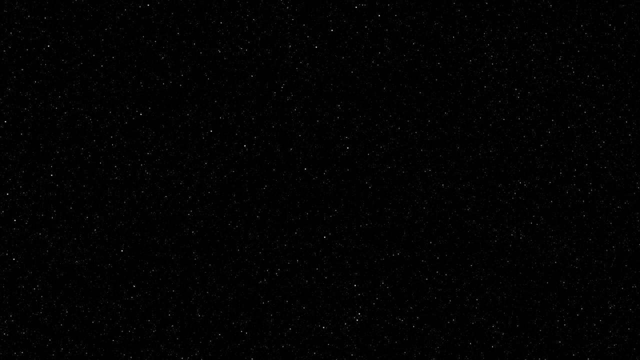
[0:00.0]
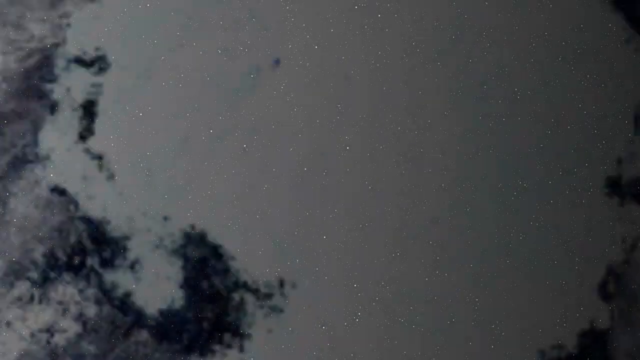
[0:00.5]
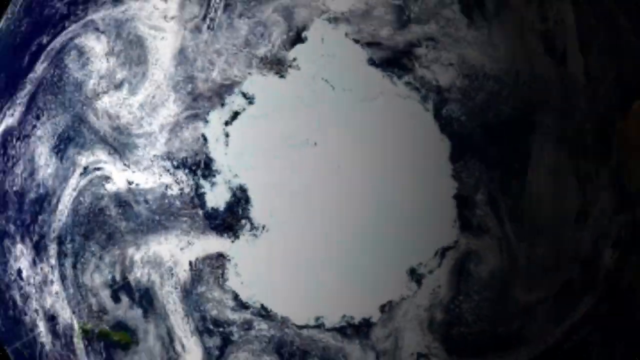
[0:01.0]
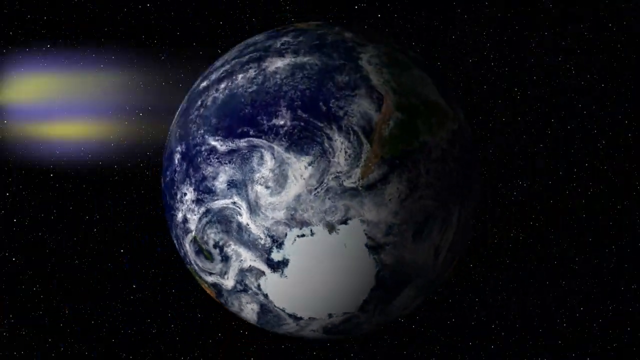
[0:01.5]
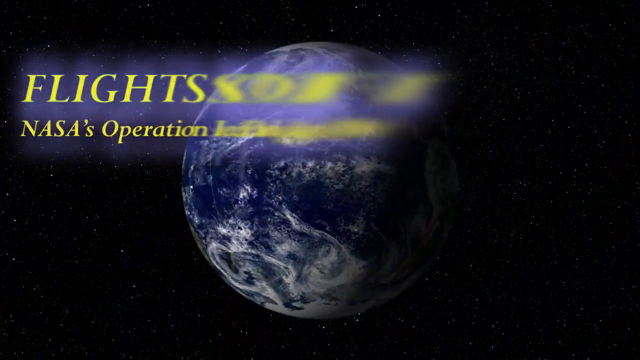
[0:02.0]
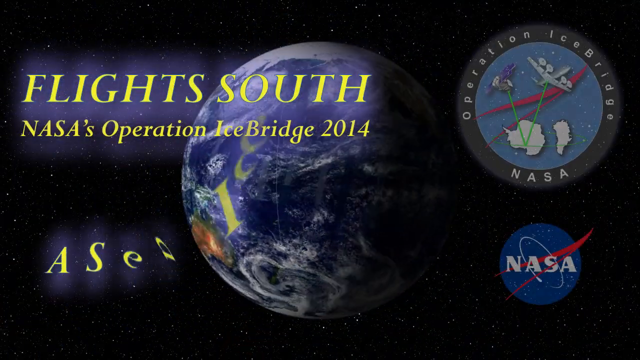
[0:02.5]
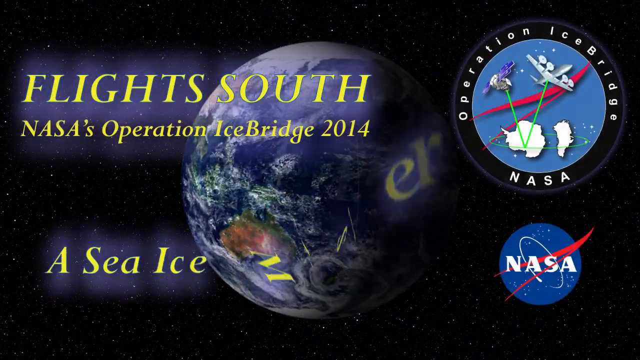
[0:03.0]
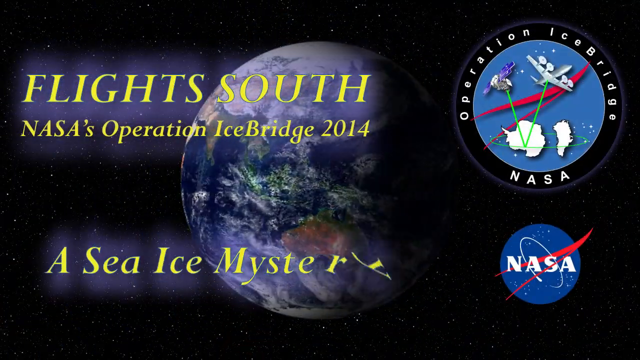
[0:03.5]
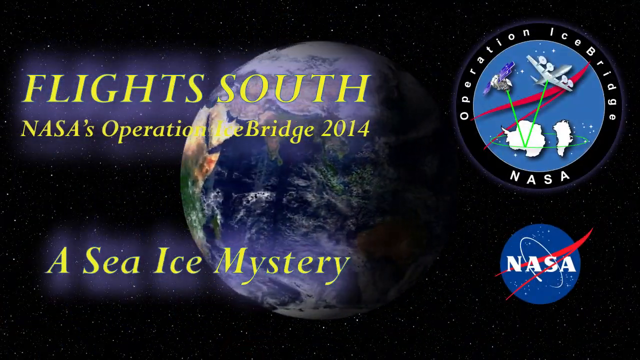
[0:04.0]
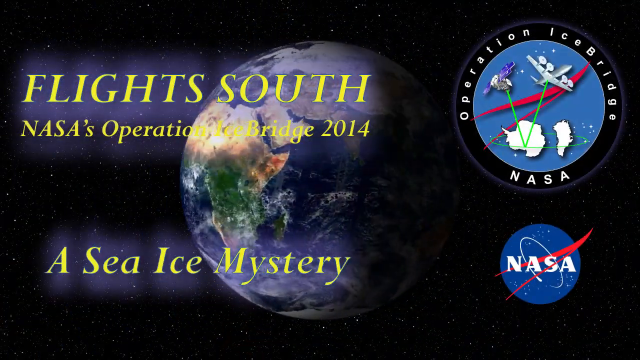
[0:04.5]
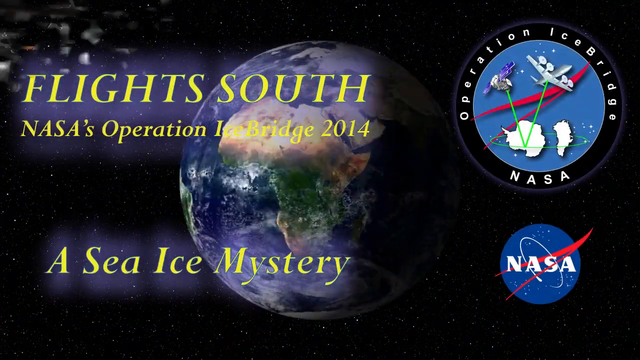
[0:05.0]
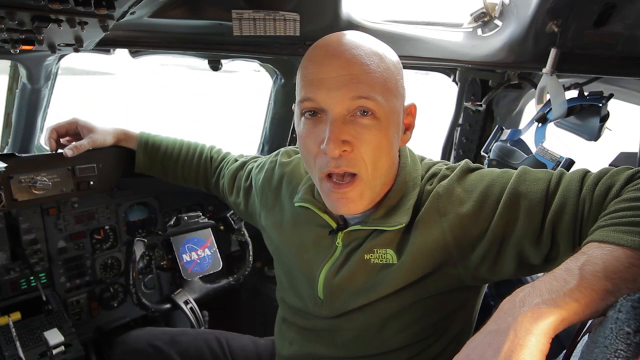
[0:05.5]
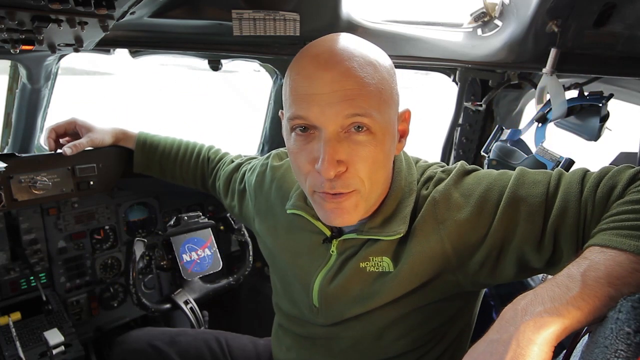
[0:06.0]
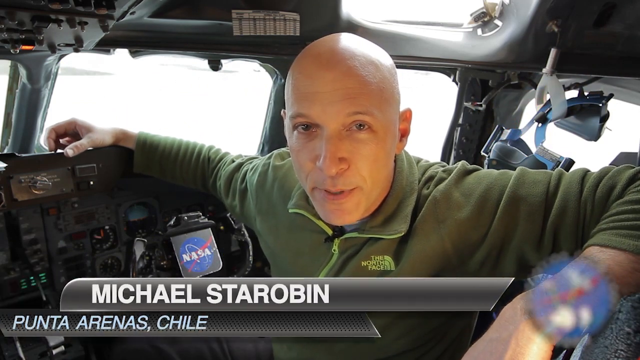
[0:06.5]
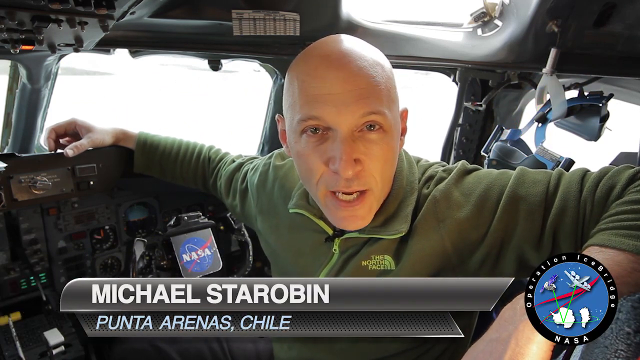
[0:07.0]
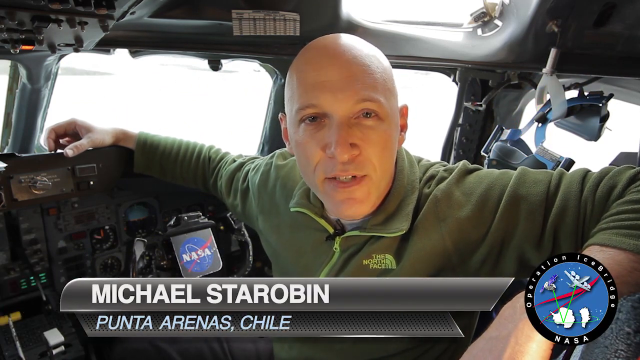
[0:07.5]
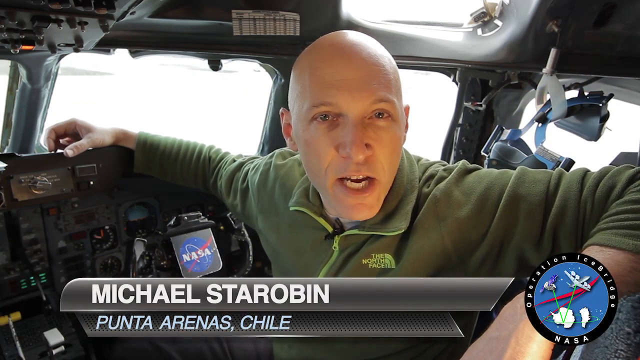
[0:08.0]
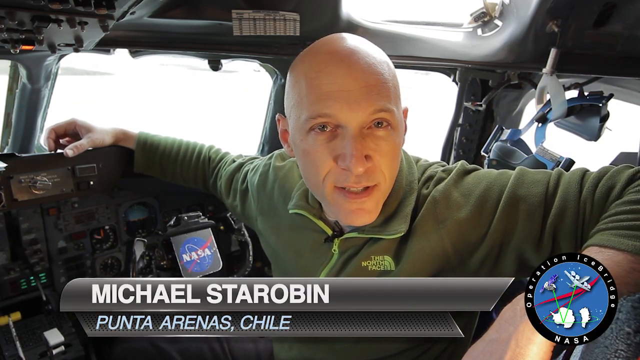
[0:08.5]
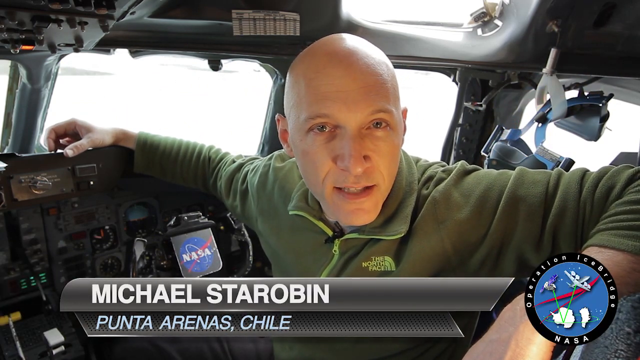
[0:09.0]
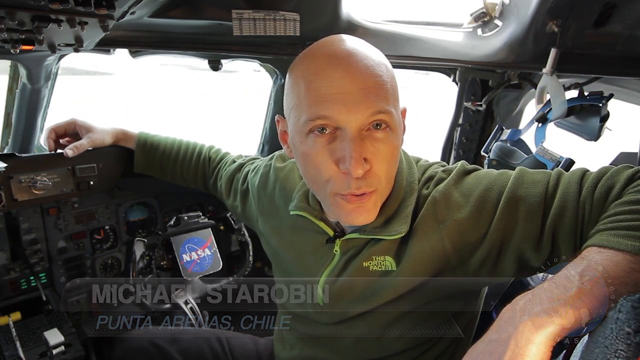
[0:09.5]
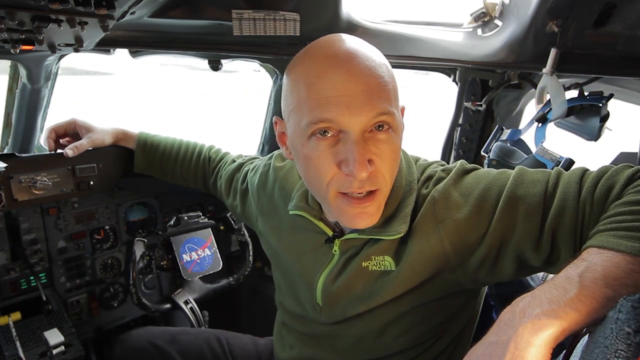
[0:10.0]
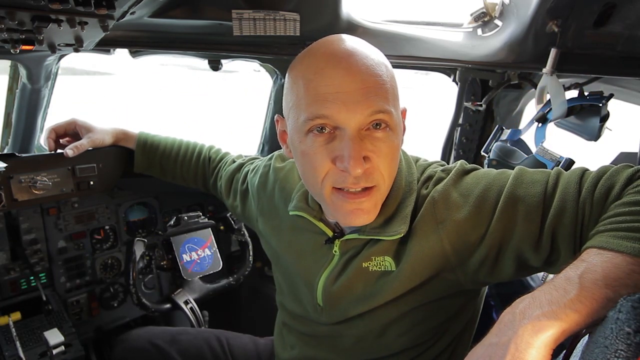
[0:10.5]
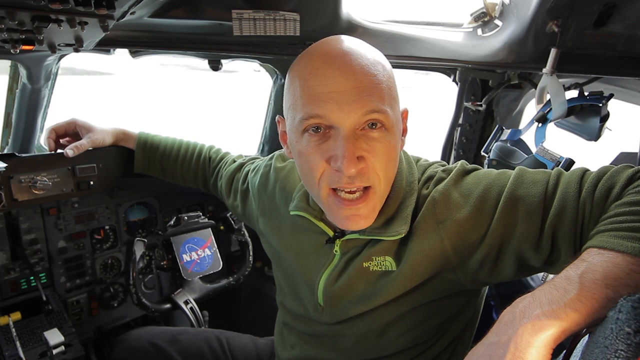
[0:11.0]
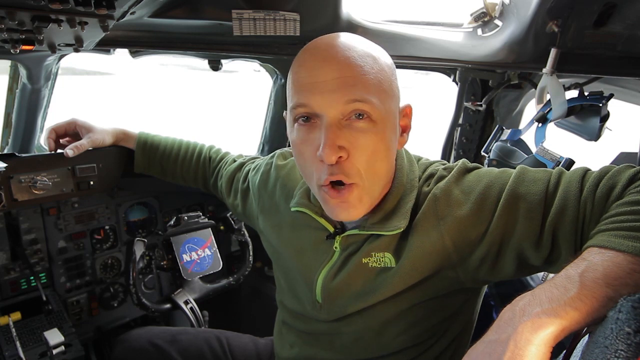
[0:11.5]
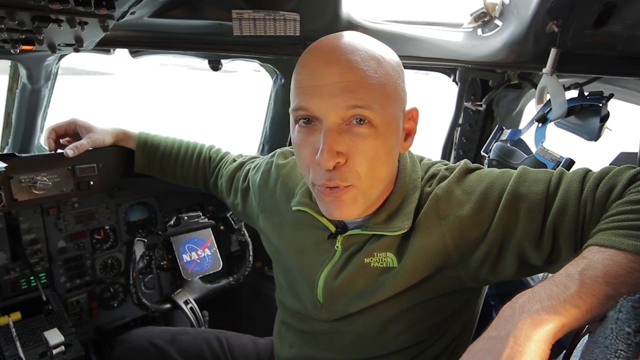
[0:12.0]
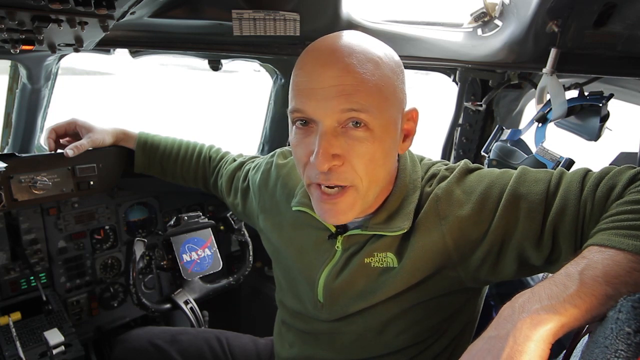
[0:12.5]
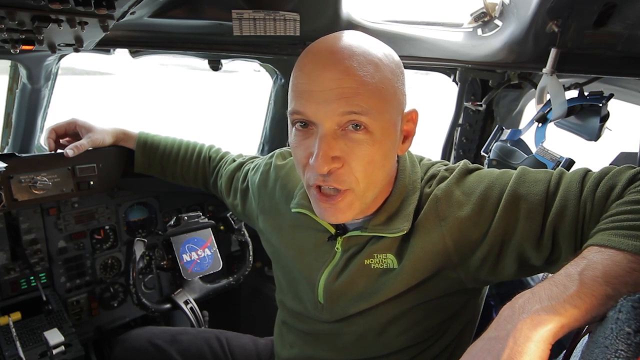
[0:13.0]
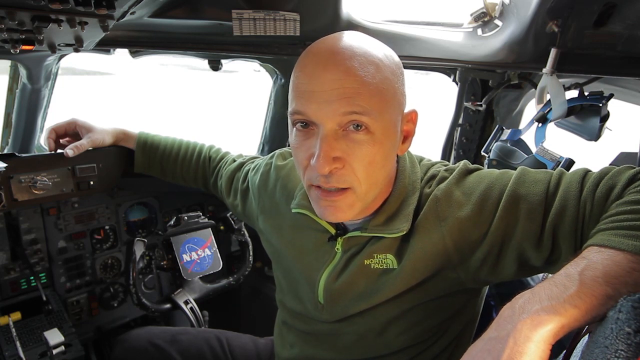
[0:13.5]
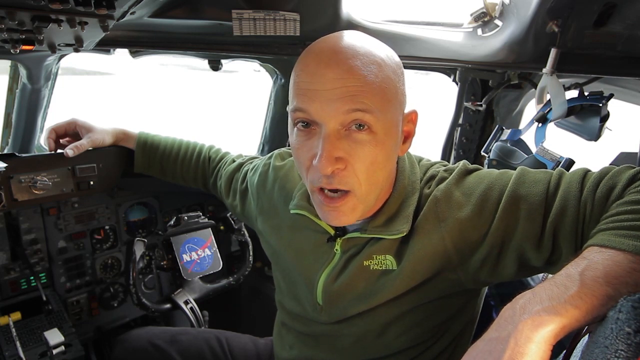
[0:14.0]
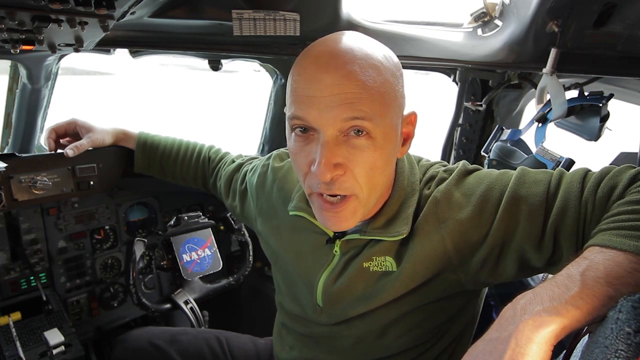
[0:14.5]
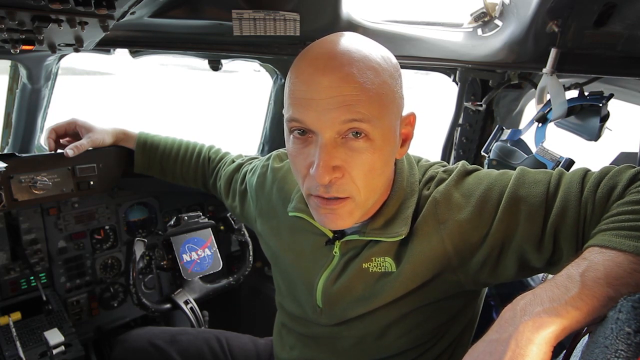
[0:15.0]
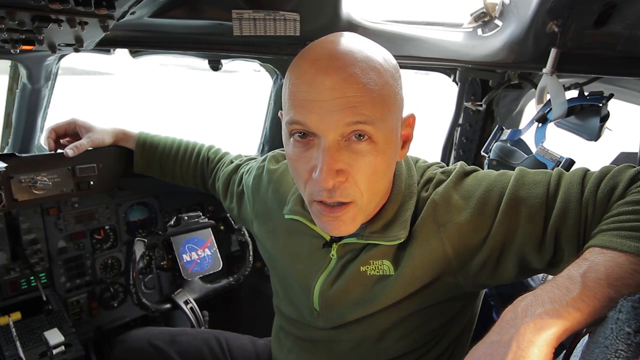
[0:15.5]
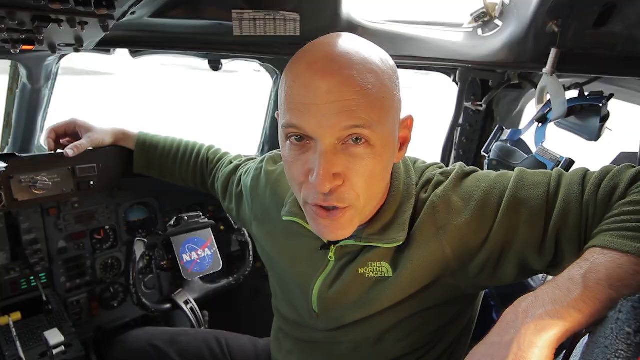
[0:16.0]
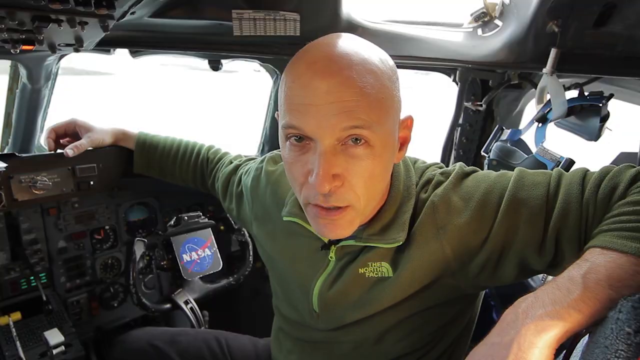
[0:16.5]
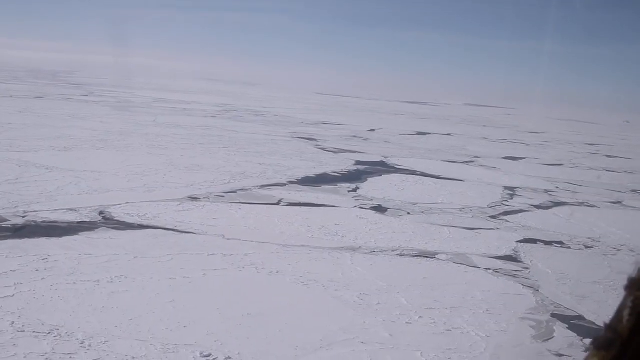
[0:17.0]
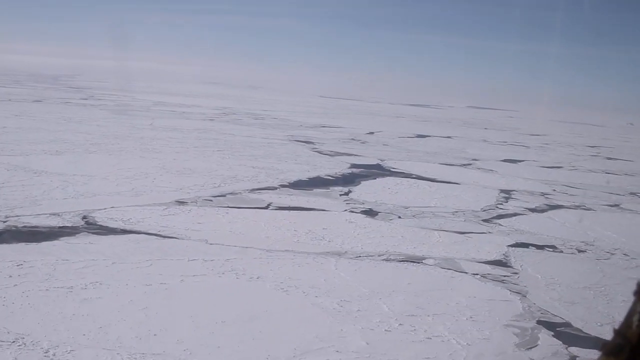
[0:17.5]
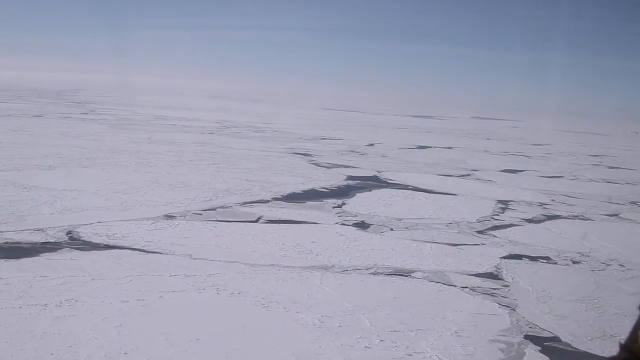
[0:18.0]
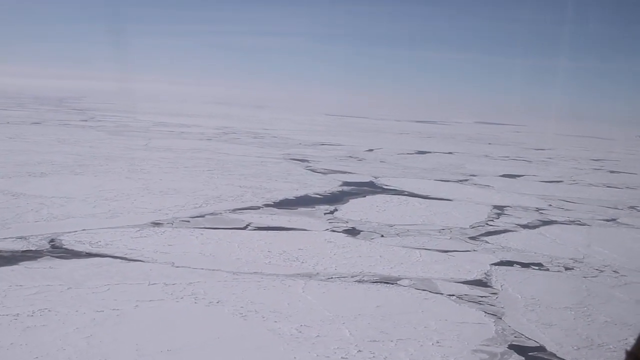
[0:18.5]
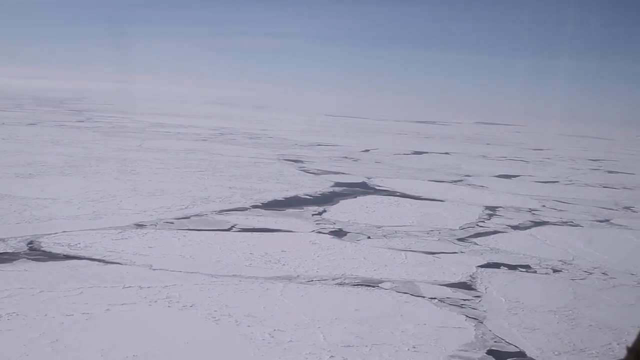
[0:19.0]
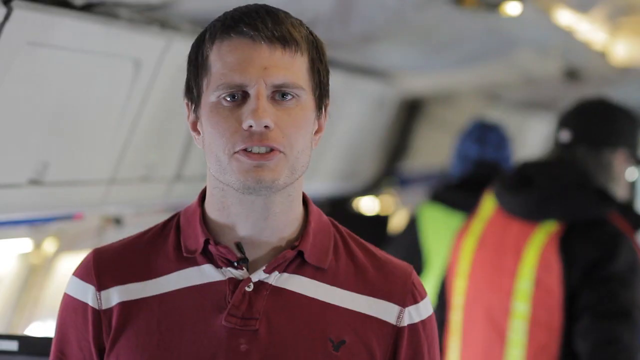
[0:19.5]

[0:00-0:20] The video opens in space, with a field of stars, and then shows the Earth. On-screen text reads "flight south NASA's operation ice bridge 2014 a sea ice mystery", along with the NASA symbol. A man is inside some type of aircraft, where a NASA symbol is also visible. He is a bald Caucasian man wearing a green North Face jacket. On-screen text reads "Michael Starobin" and "Chile". He keeps talking and looks fairly intense. An aerial view shows icy terrain that looks like Antarctica or something similar. Toward the end of the shot, another Caucasian man in a red top appears on screen, with no name shown for him yet.